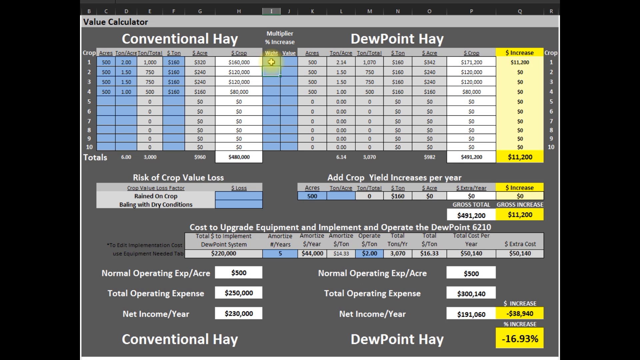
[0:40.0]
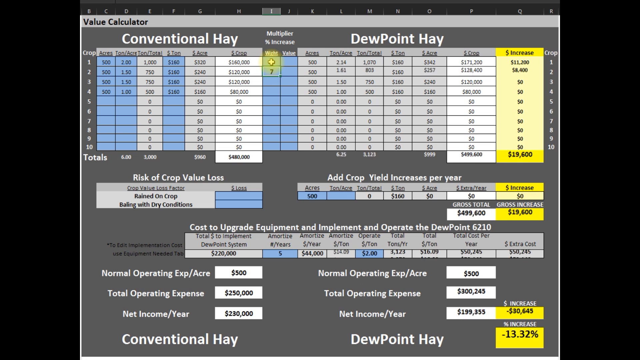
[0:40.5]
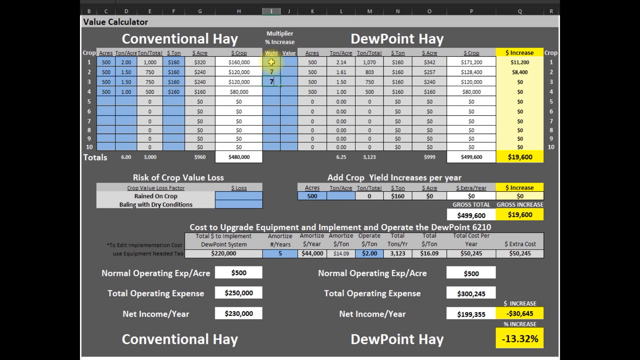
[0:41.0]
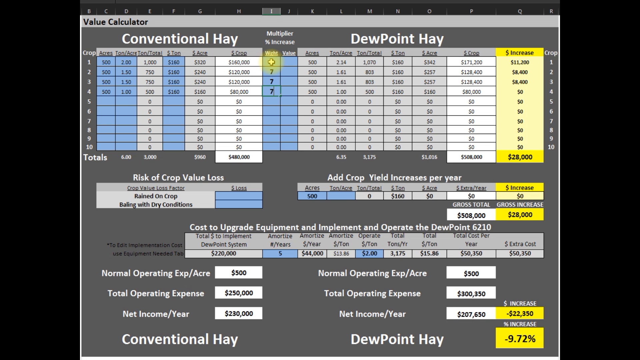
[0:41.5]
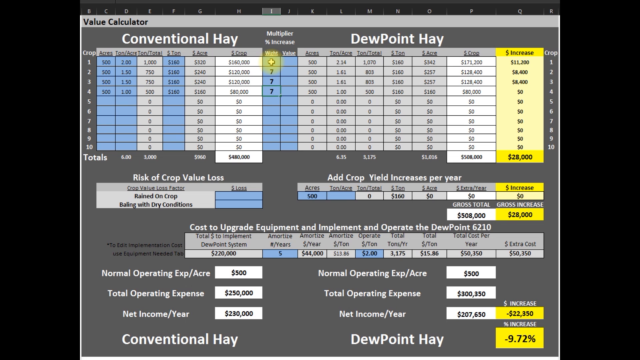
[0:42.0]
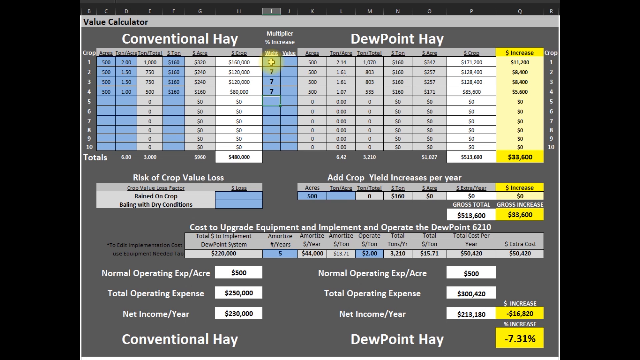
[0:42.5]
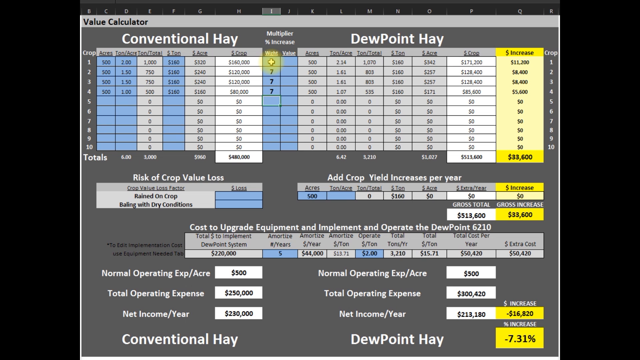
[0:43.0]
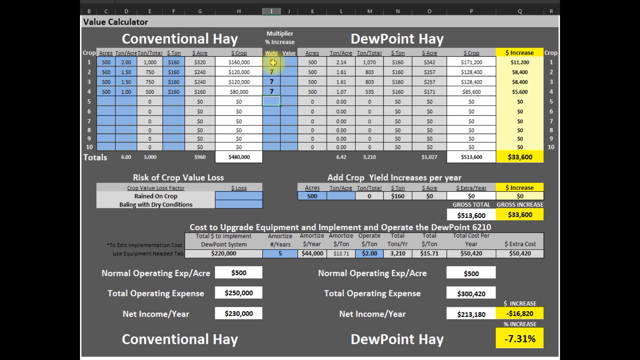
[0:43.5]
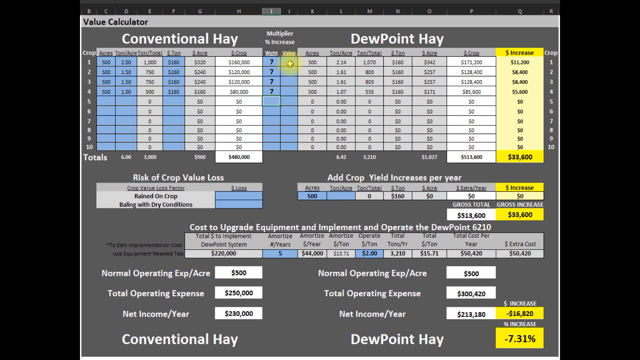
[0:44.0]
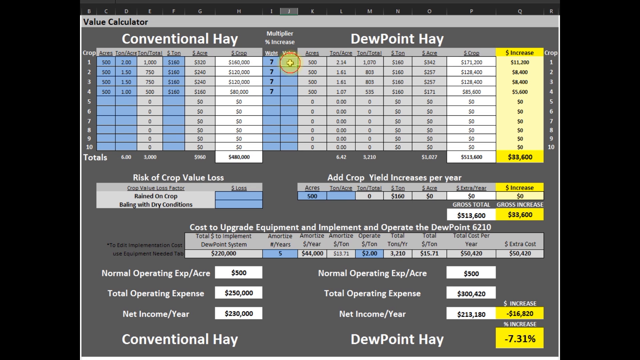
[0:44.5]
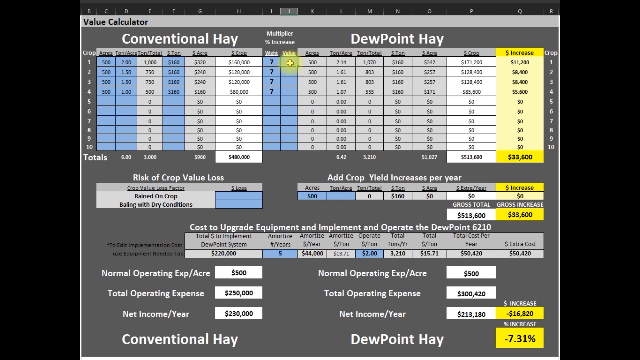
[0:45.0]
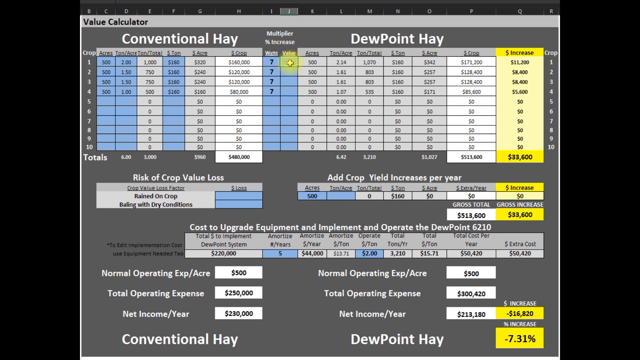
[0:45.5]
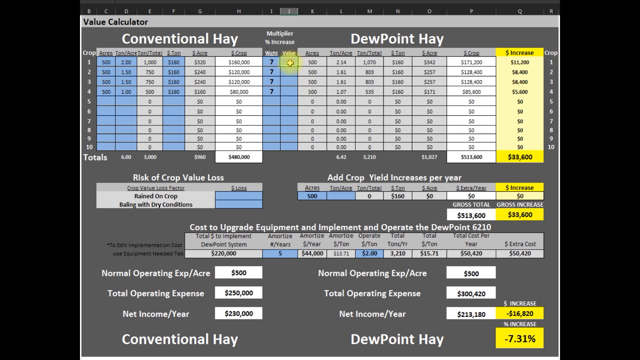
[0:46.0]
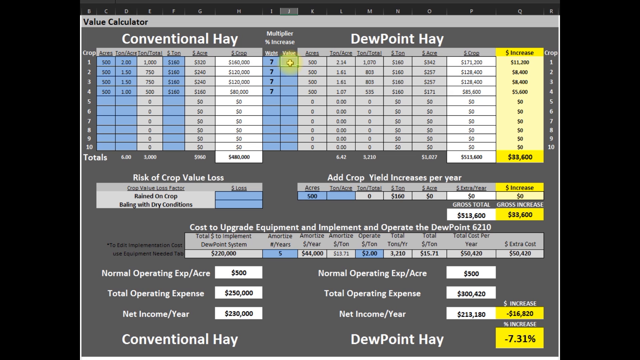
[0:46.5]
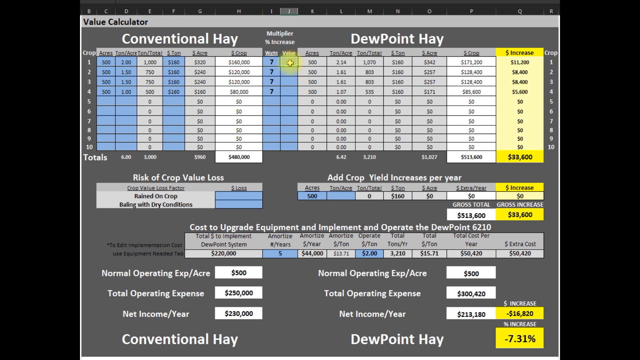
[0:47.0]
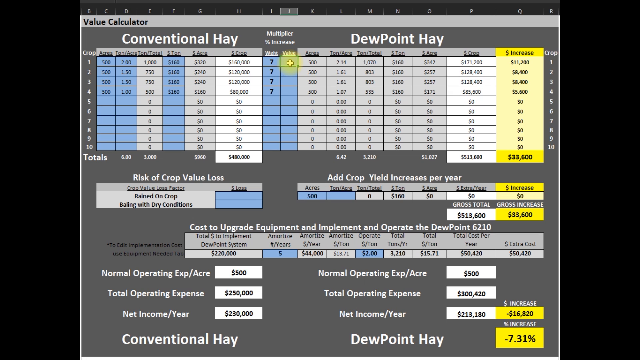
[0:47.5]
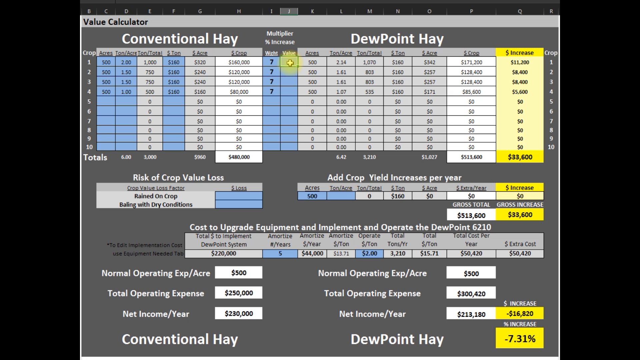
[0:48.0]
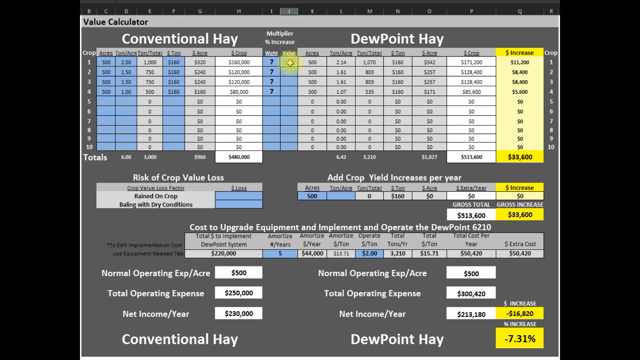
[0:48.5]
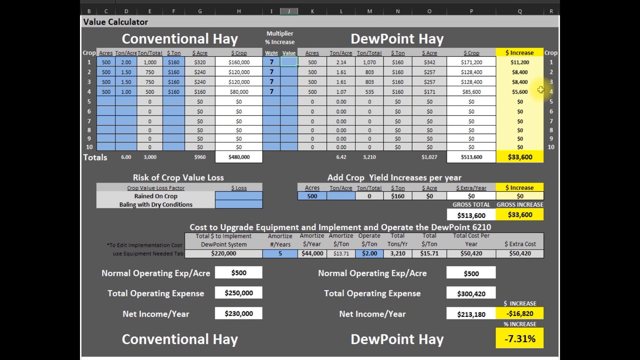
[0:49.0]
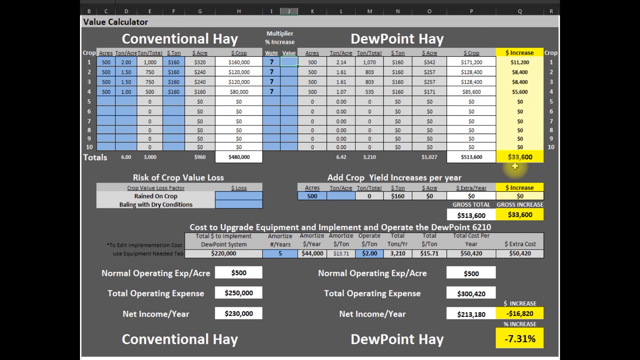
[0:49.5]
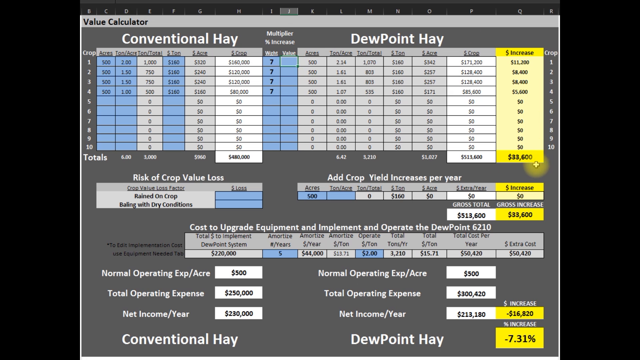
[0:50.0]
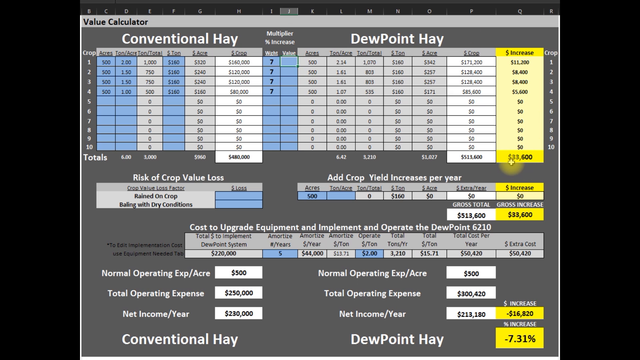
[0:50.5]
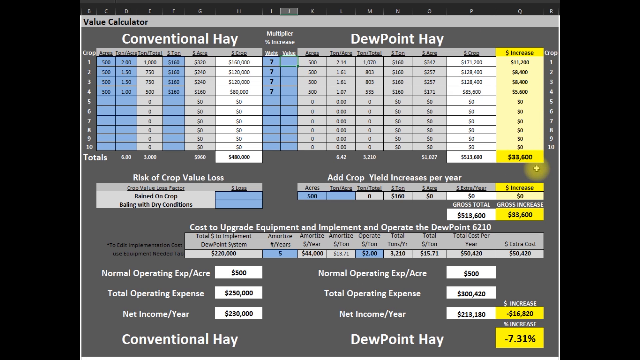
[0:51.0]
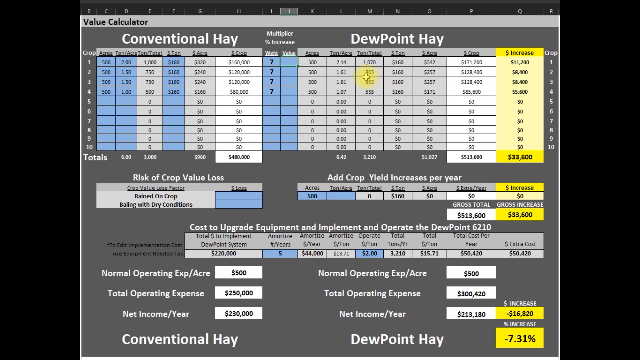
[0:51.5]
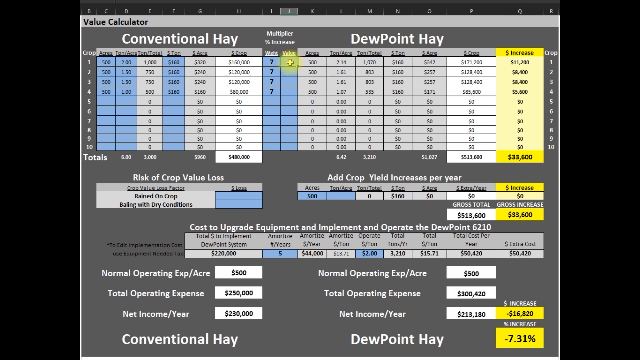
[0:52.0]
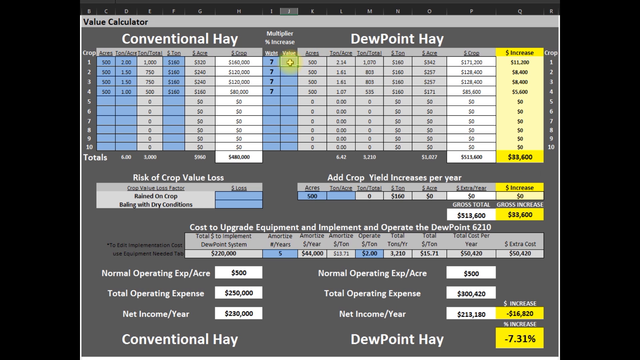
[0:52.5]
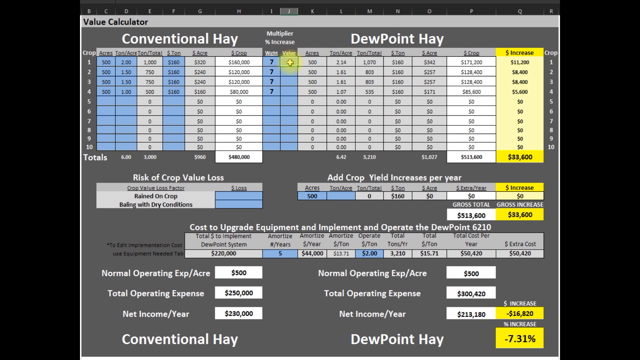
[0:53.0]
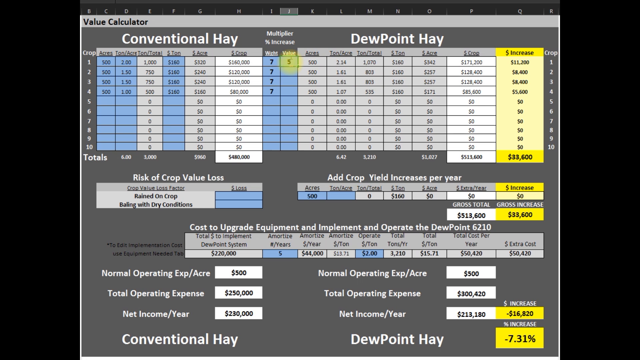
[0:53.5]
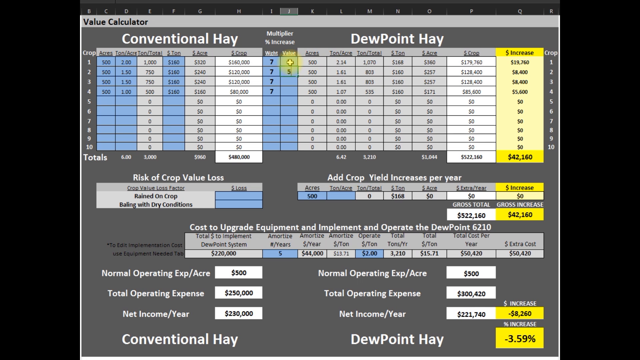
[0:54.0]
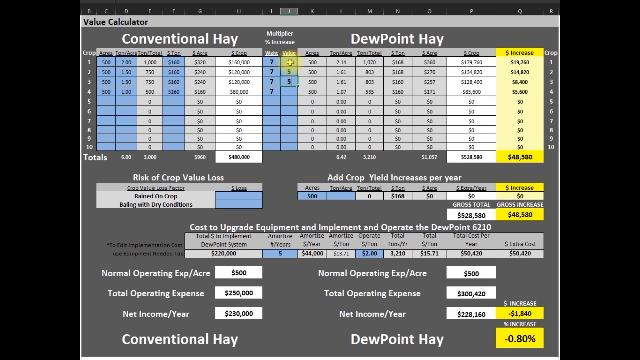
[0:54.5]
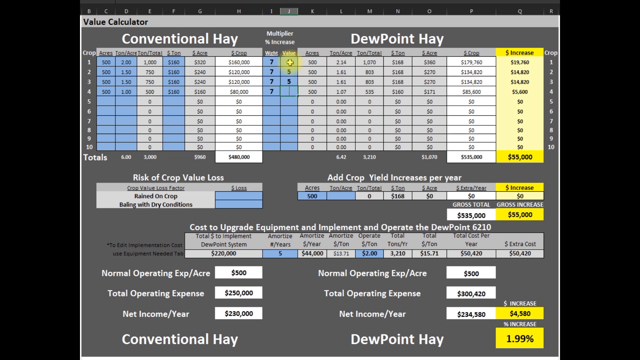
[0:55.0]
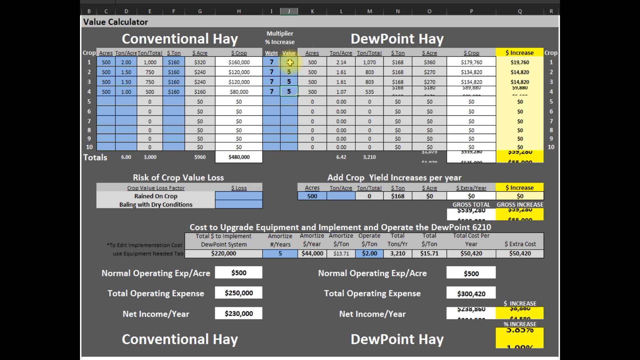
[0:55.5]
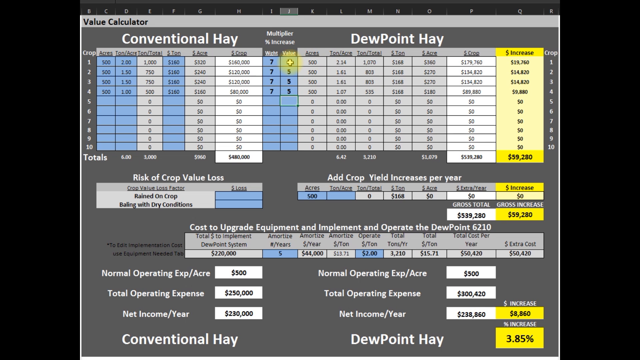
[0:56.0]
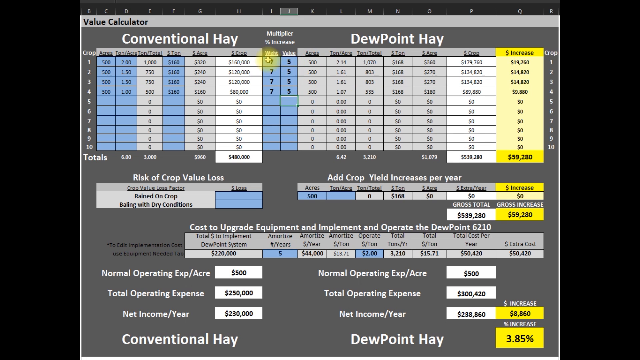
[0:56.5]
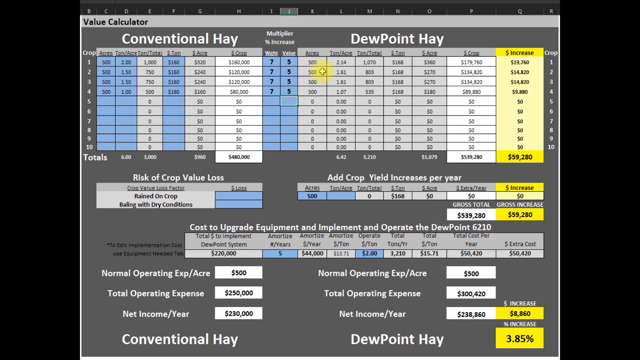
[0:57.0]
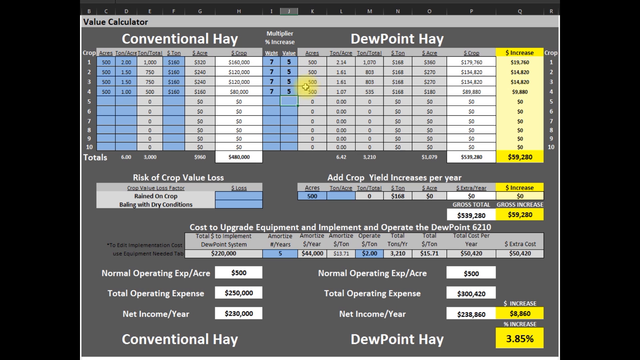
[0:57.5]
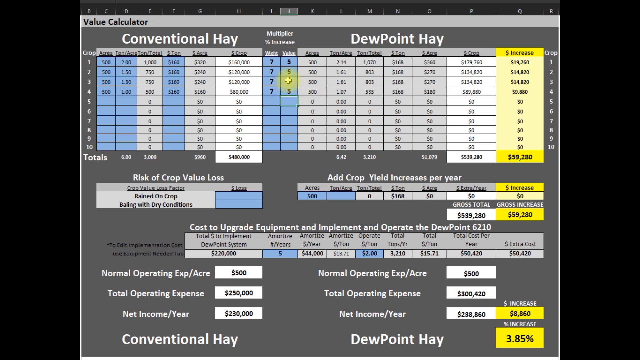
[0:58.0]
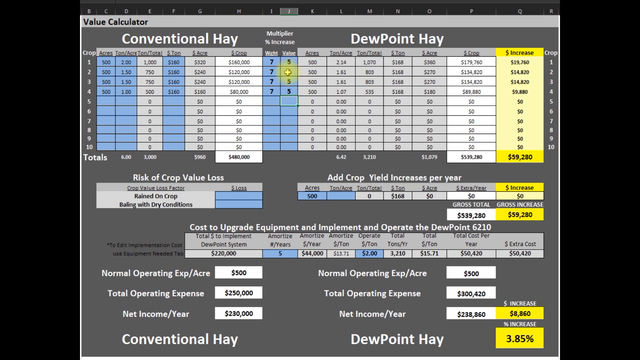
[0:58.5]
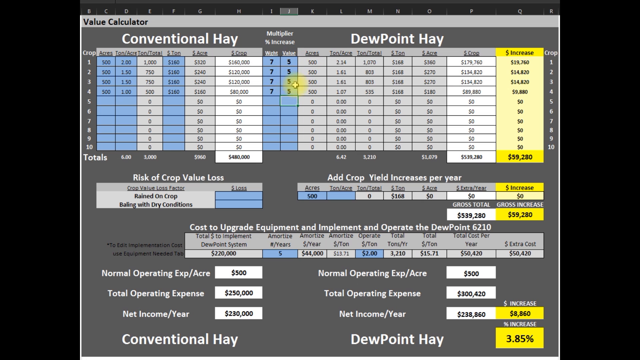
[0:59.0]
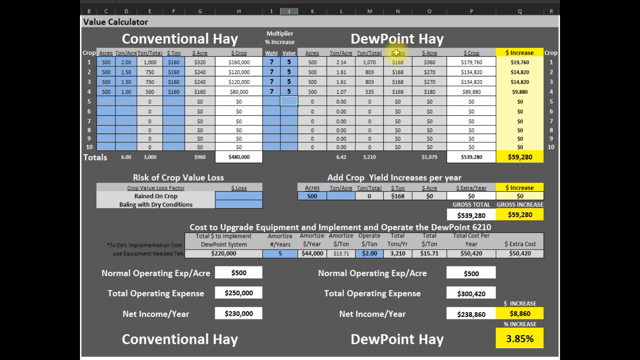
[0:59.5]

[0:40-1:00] The sheet looks very similar to an Excel sheet, possibly Excel with its color changed from green to a solid gray. Letters at the top mark the columns, running from B to R; column A is not visible, apparently scrolled past. The person types in what seems to be a seven, after which values change. Text reading "percent increase" is visible. Between the left area labeled "conventional hay" and the right area labeled "DEW point hay", two blue rows separate the sections. The mouse moves to the other blue column and types five, and the person does this for the first four rows.